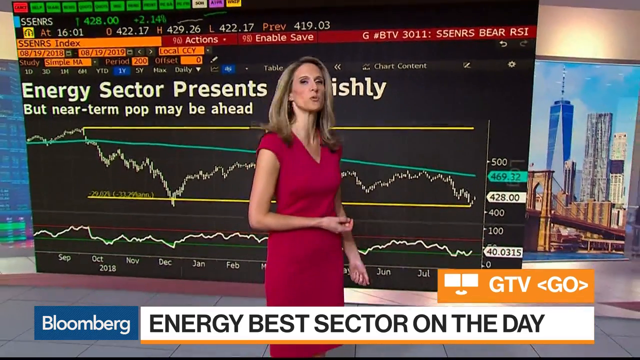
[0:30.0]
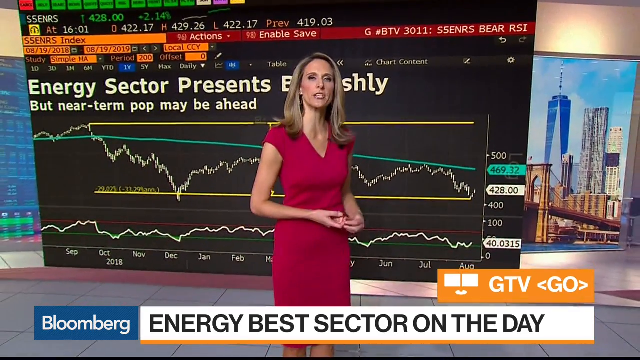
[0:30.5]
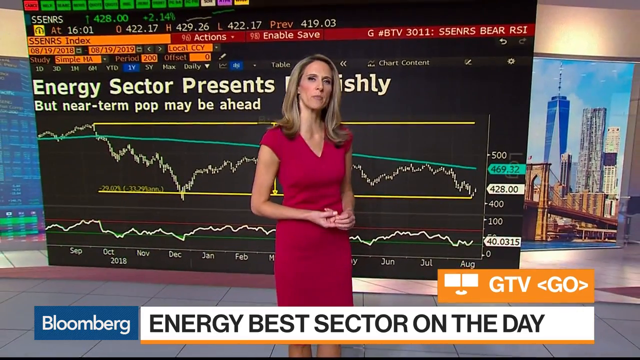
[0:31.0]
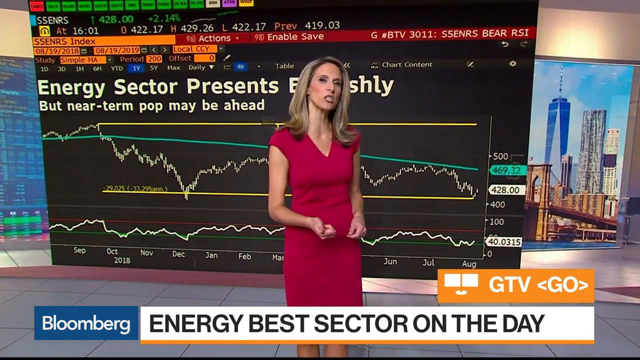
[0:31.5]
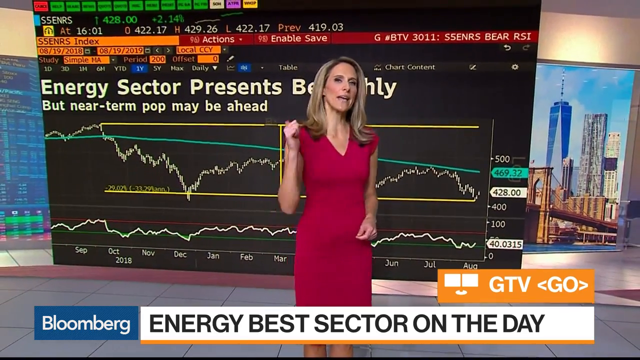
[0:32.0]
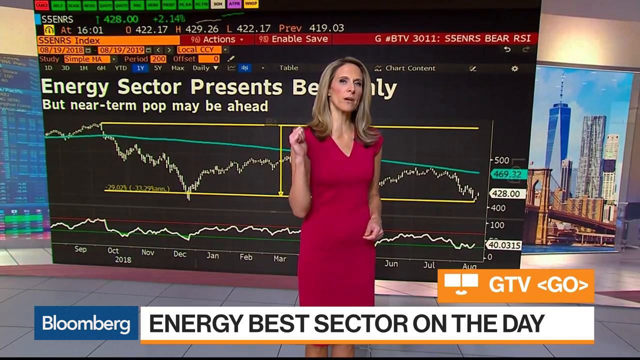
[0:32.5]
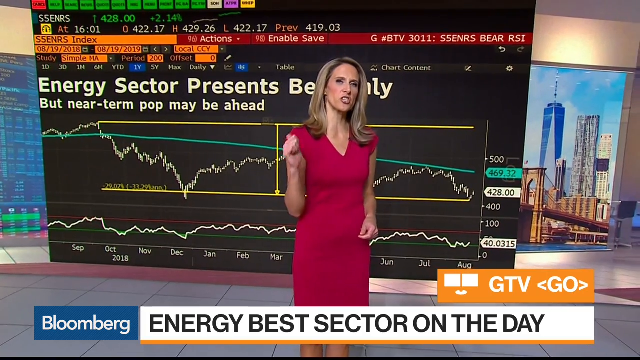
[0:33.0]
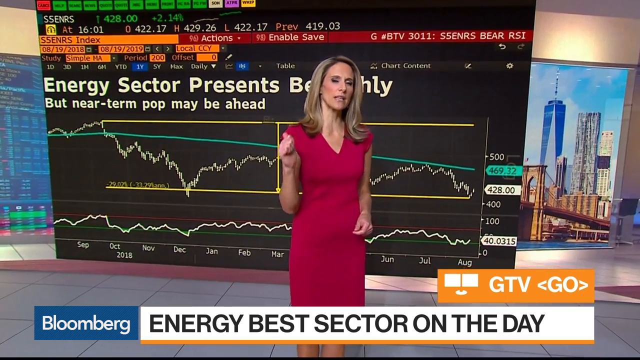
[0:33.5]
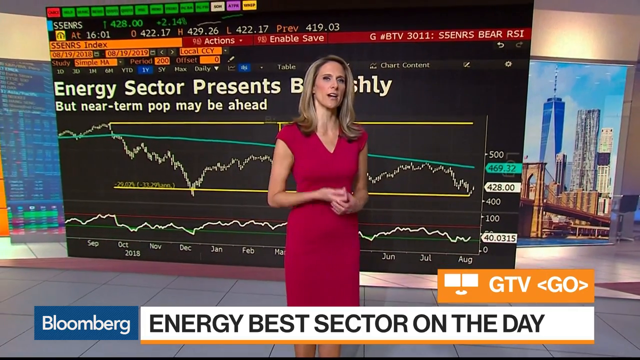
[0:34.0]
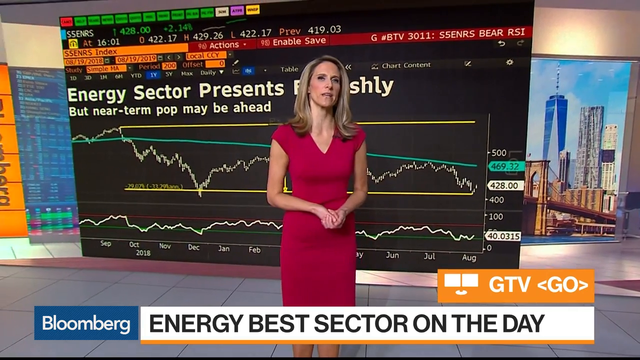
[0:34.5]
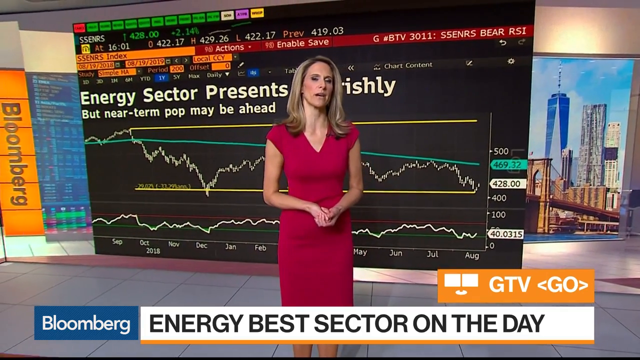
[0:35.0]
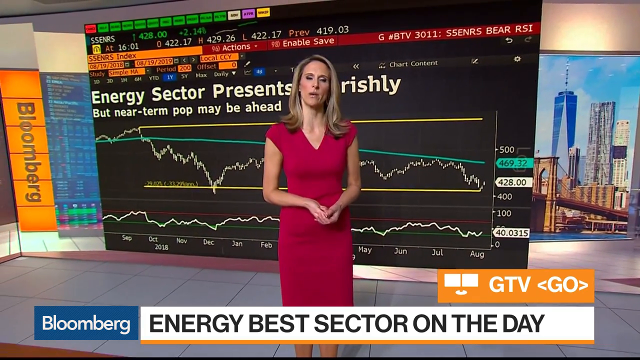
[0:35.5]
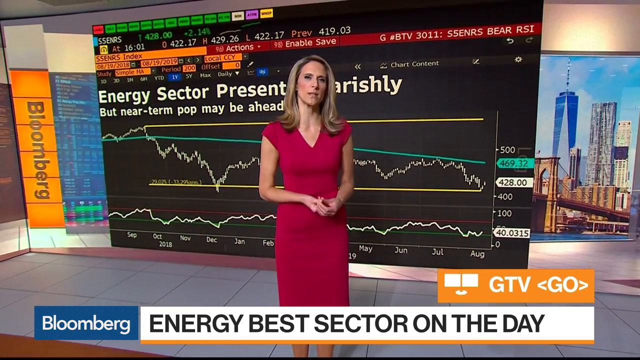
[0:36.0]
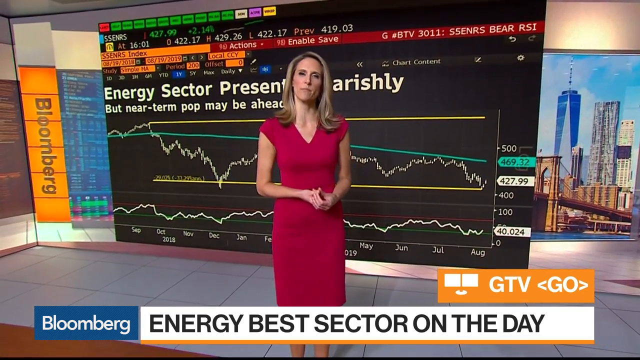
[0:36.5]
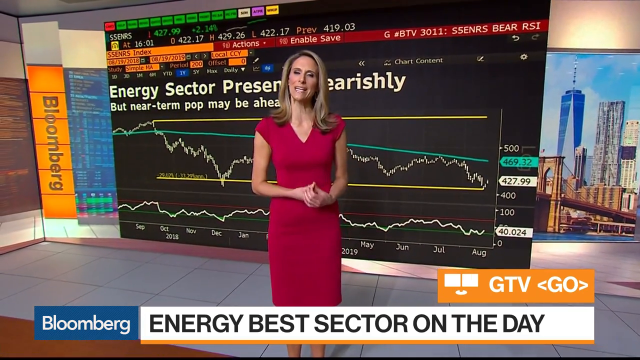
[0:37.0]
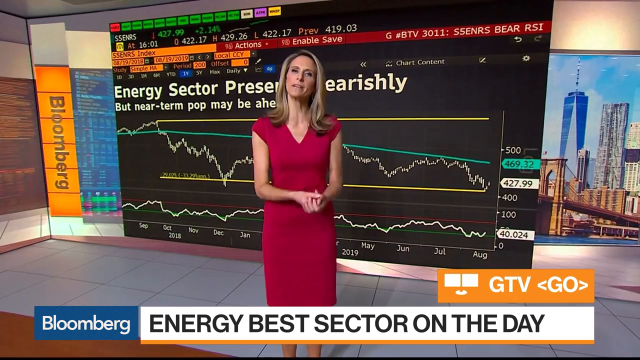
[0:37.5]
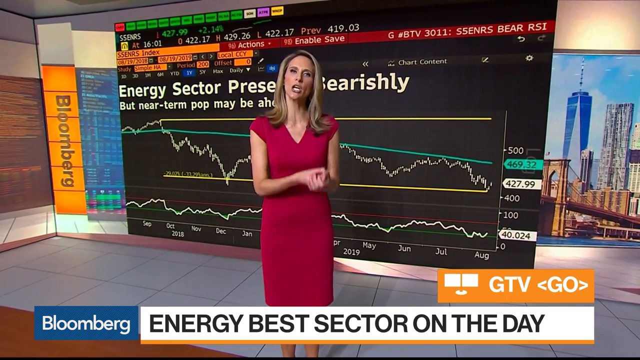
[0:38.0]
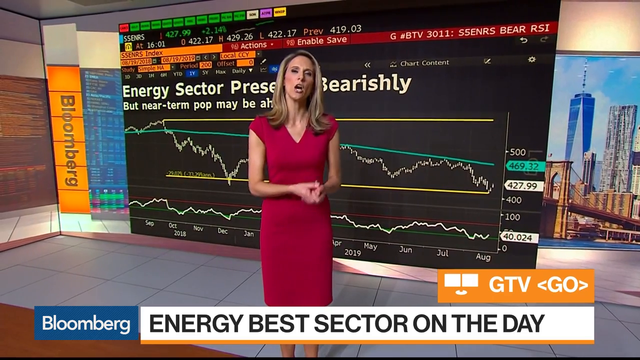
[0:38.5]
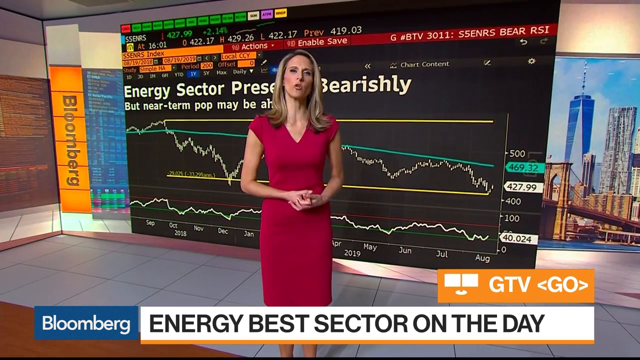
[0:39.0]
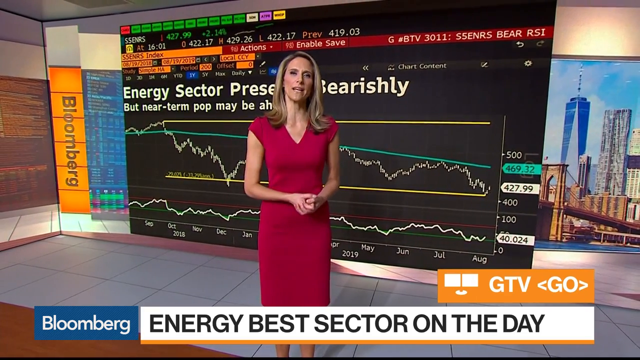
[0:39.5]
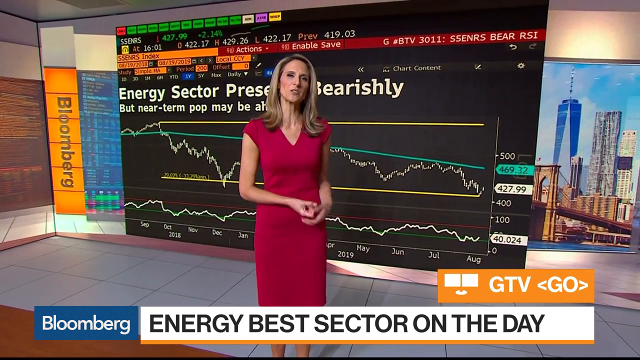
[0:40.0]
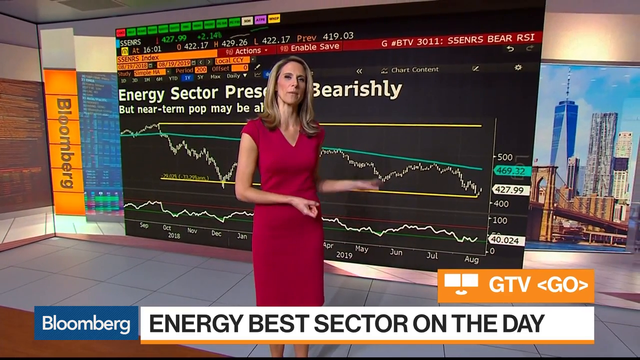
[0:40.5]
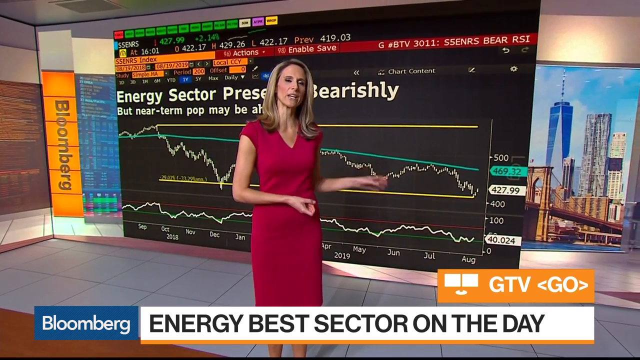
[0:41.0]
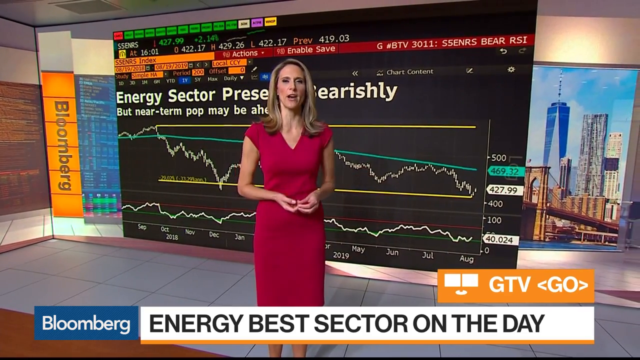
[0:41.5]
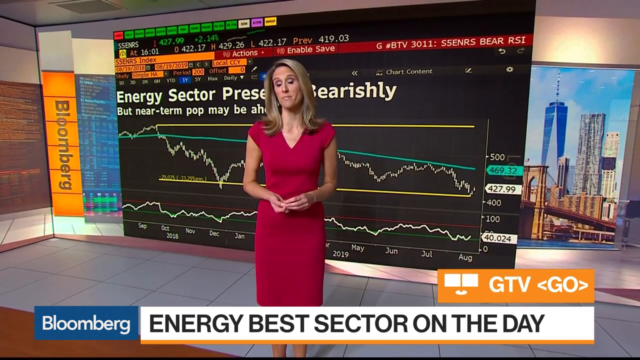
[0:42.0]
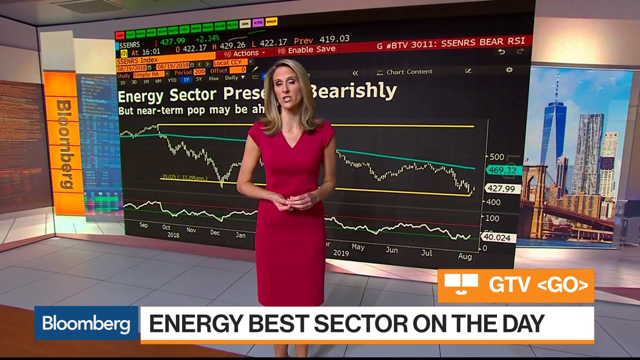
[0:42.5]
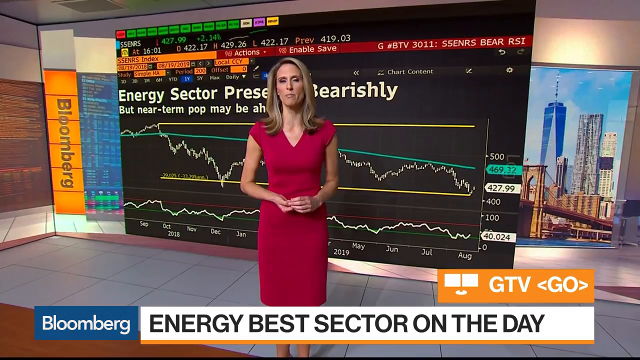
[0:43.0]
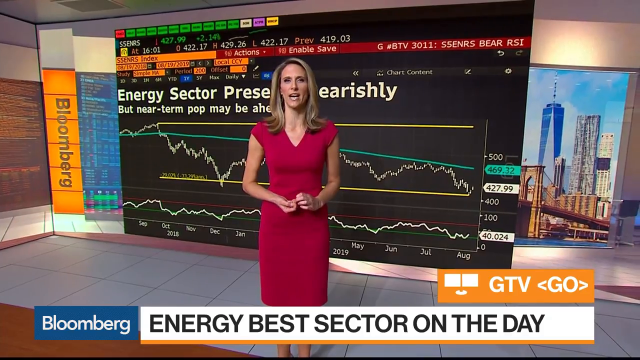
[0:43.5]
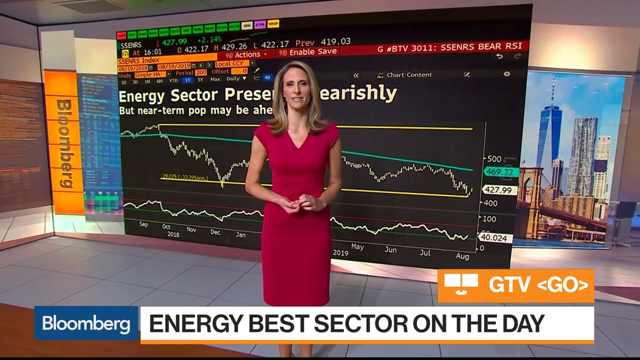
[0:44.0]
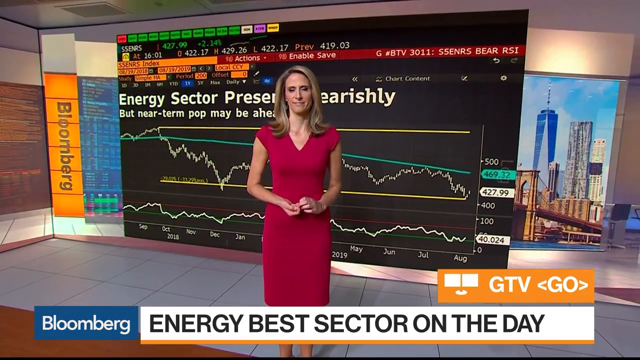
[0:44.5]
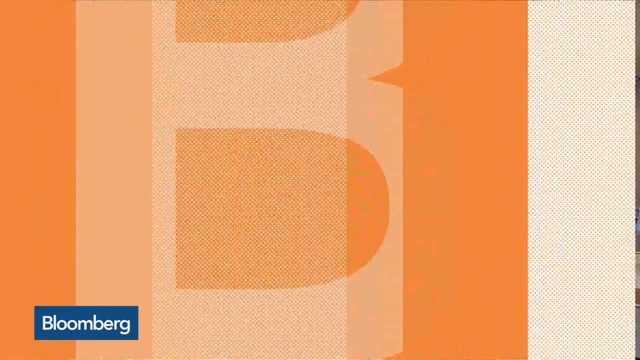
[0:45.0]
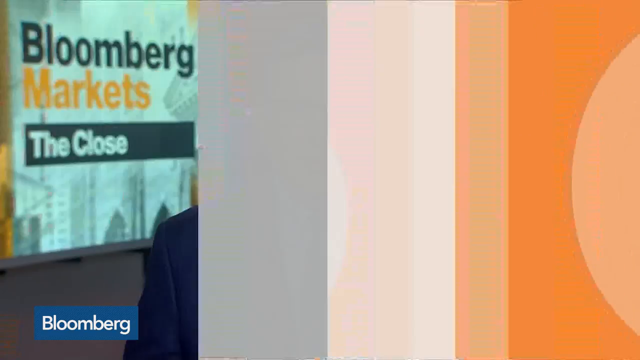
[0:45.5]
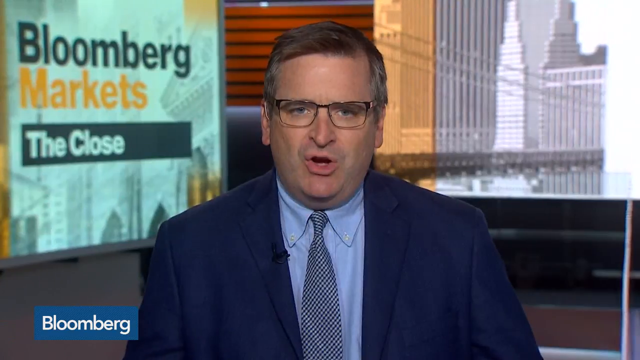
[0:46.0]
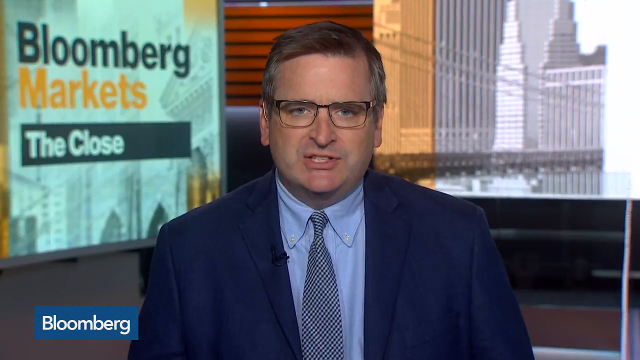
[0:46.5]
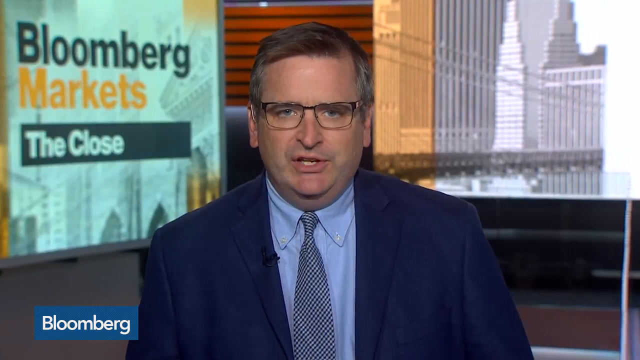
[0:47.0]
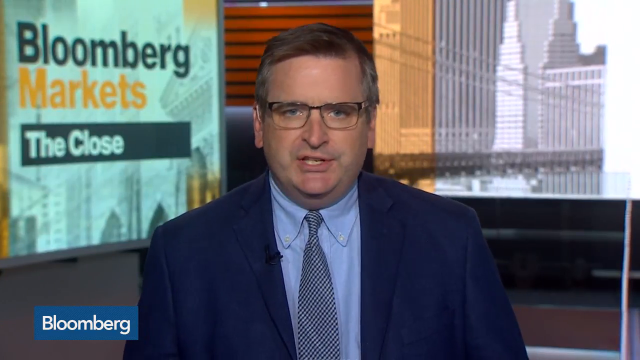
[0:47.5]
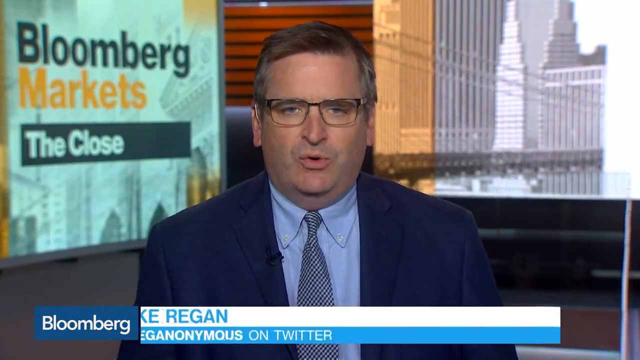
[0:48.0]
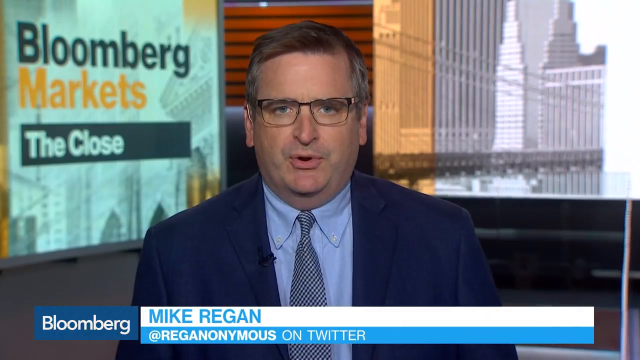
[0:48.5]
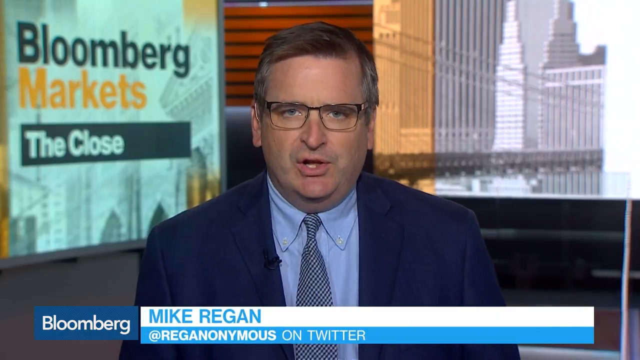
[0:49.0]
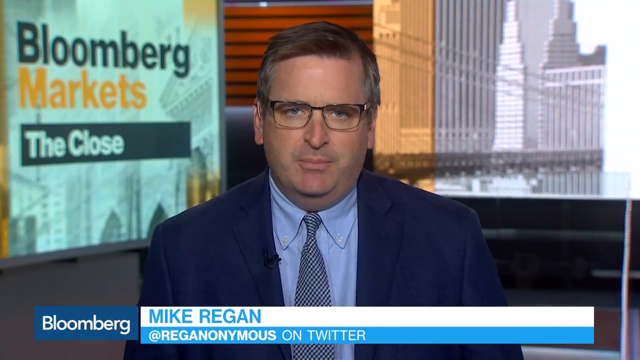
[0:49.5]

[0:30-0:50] A light-skinned woman with blonde hair in a red dress is at the center of the screen, standing in front of a graph of statistics titled "energy sector presents bearishly" in white text, with "but near-term pop may be ahead" underneath. The graph trends somewhat downward. At the bottom center, a blue banner reads "Bloomberg" in white text, and a white banner reads "energy best sector on the day" in black text. On the right is an orange banner with white text reading "GTV go." The woman talks toward the camera, pointing with her thumb over her right shoulder toward the chart and gesturing expressively. The camera zooms out and pans to the right, revealing an orange banner on the far left beyond the graph that reads "Bloomberg" in black text in a vertical scroll. To its right is an illustration of an urban environment with bridges and skyscrapers flanking behind the graph. The camera then moves to a light-skinned man with short brown and gray hair, wearing glasses and a dark blue suit, looking toward the center of the screen. At the bottom center, blue text on a white banner reads "Mike Reagan," followed by his Twitter tag, next to the Bloomberg logo on the left.